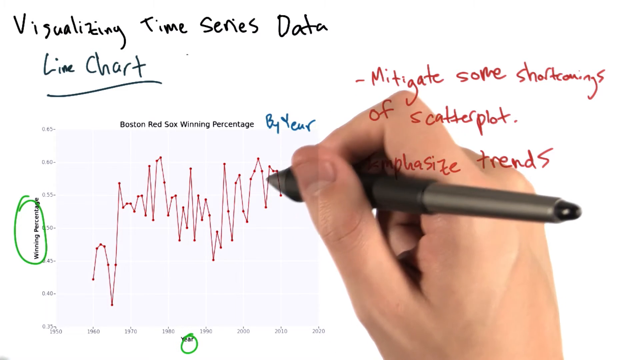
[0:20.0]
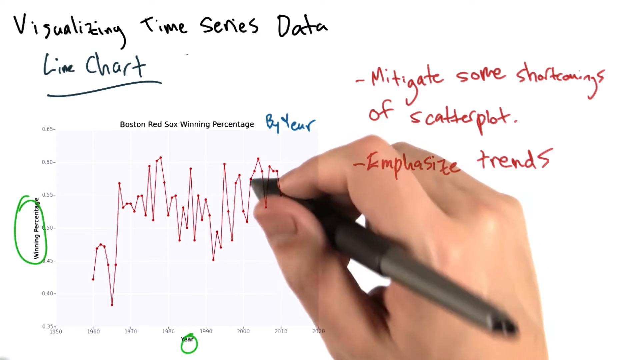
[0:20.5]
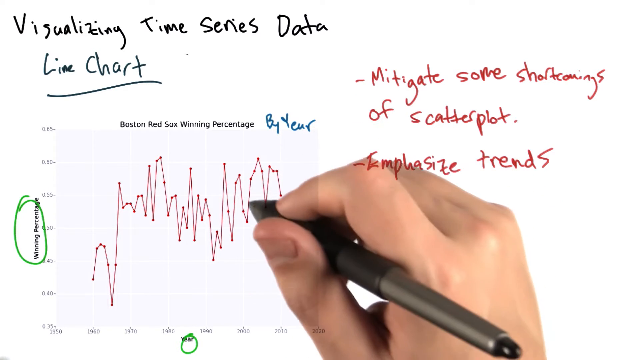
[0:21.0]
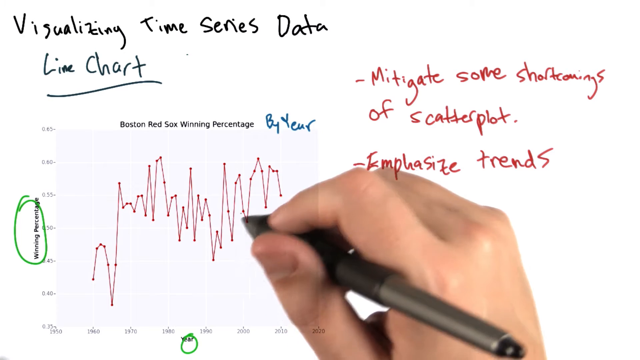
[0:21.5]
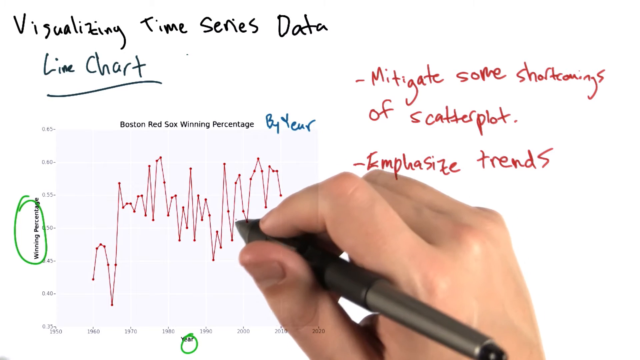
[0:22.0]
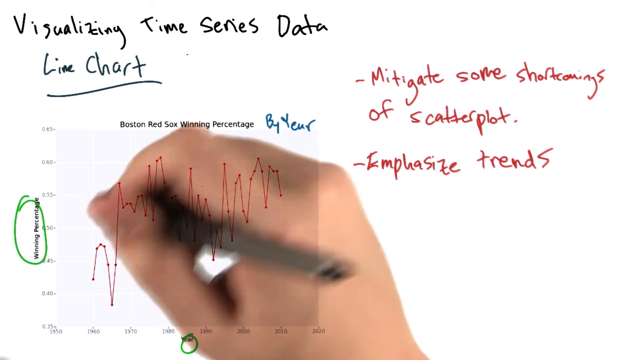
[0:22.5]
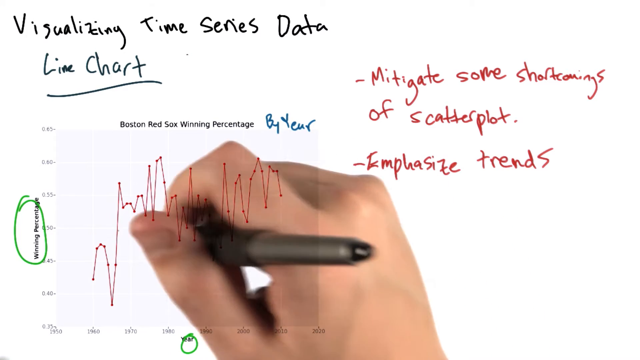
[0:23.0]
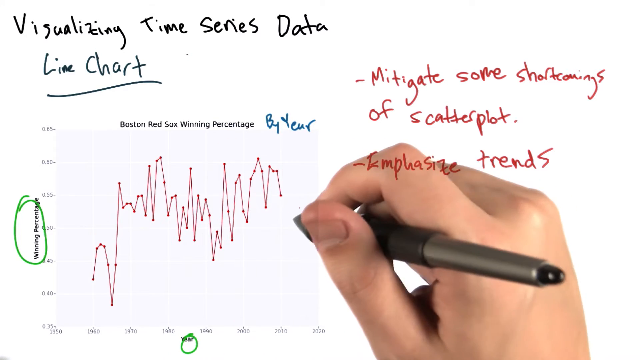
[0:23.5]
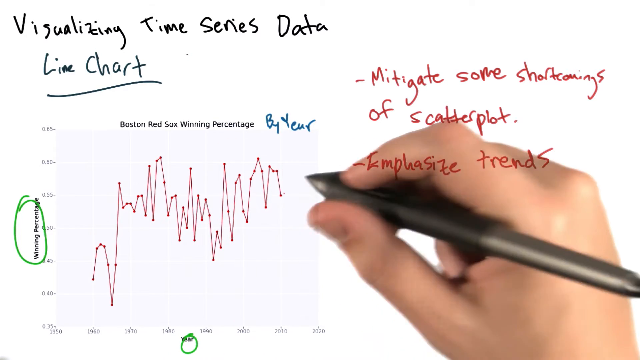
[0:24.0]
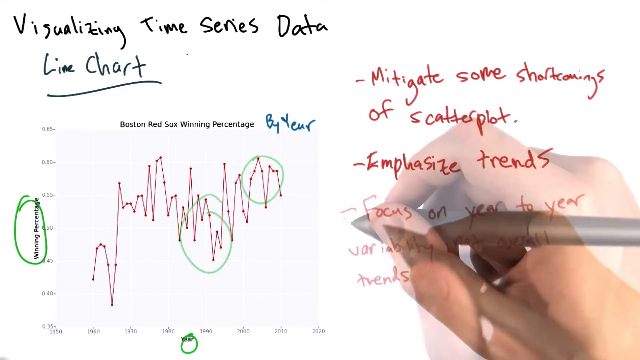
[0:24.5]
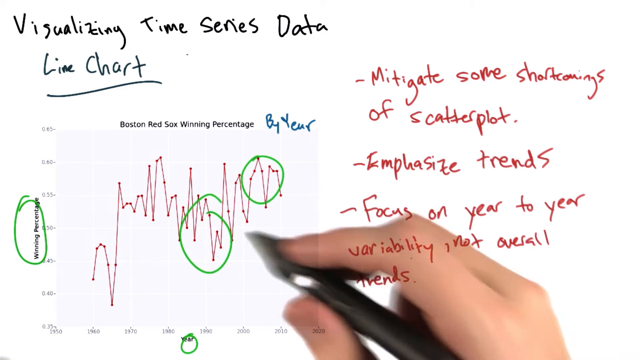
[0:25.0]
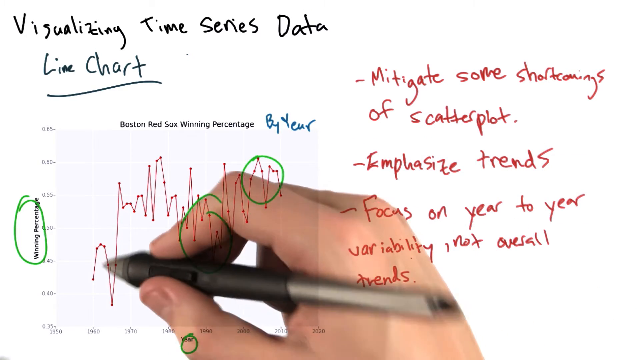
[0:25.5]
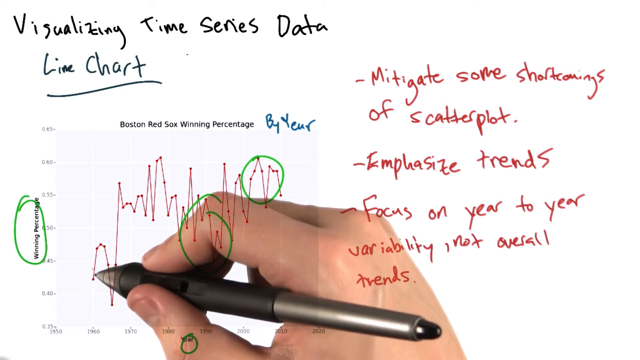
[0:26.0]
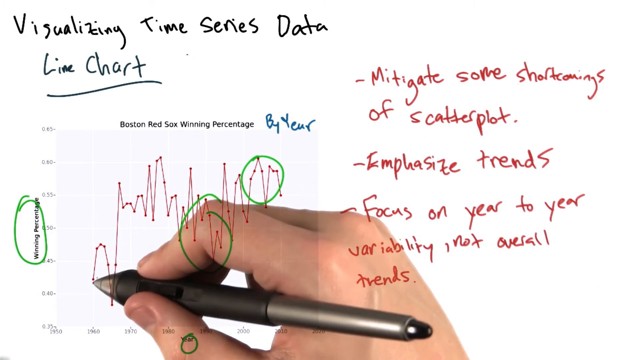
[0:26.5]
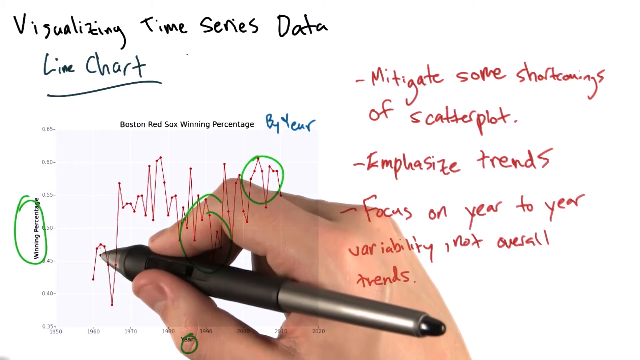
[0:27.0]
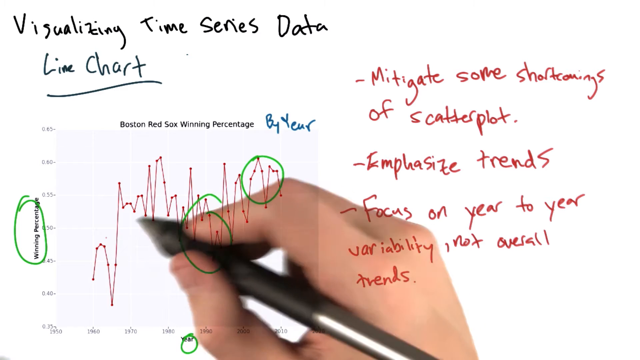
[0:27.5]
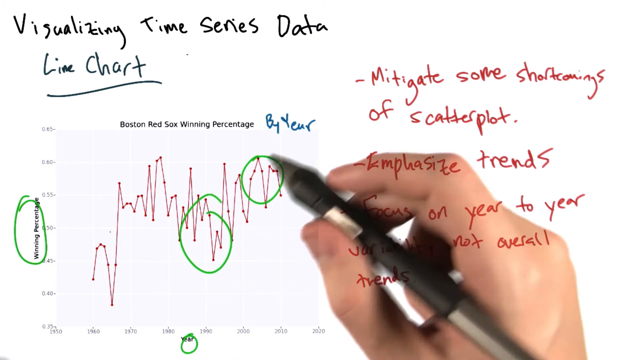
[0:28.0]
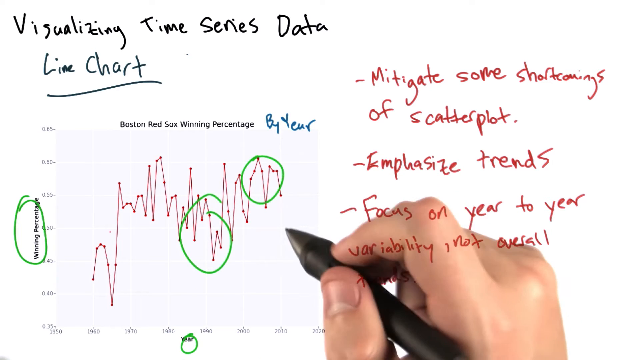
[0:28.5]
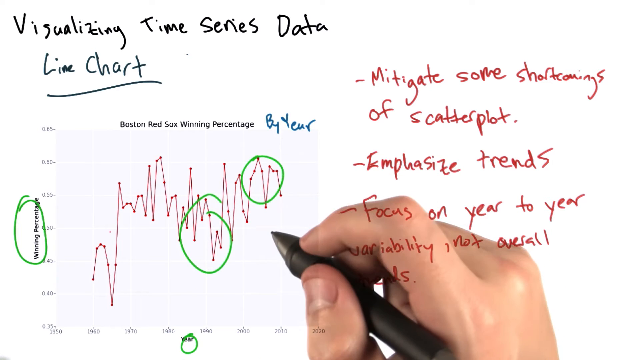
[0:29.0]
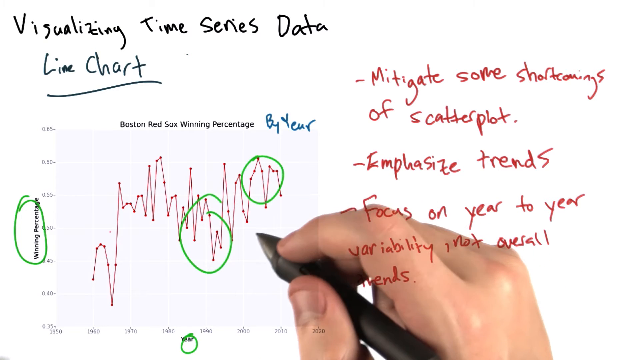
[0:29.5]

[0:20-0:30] The same line chart is on screen, and off to the side are "mitigate some shortcomings of scatterplot" and "emphasize trends," written in red. The person has circled areas of the graph, and off to the right, under "emphasize trends," they have written "focus on year-to-year variability, not overall trends." The person's fingernails are bitten off a lot, suggesting they are possibly a nail biter, and the veins on the back of the hand show up very strongly, possibly indicating that the person works out.